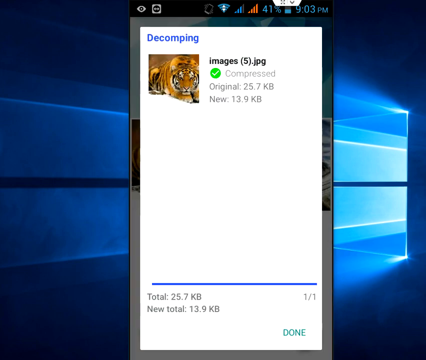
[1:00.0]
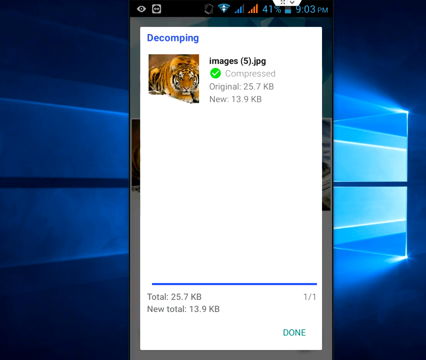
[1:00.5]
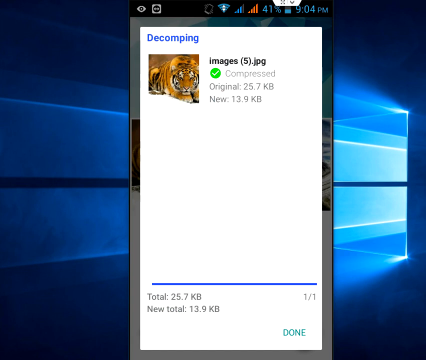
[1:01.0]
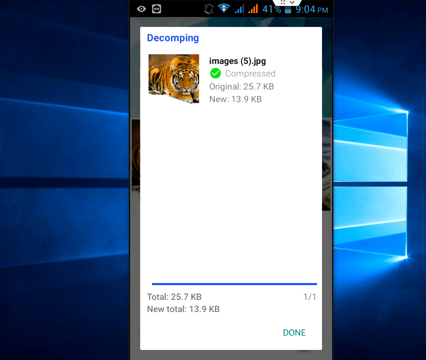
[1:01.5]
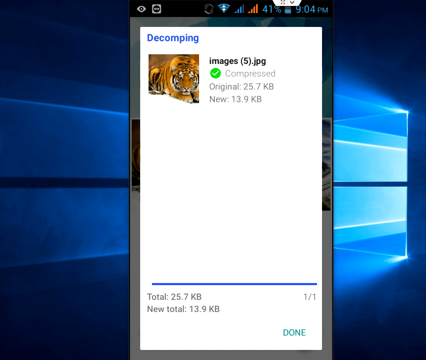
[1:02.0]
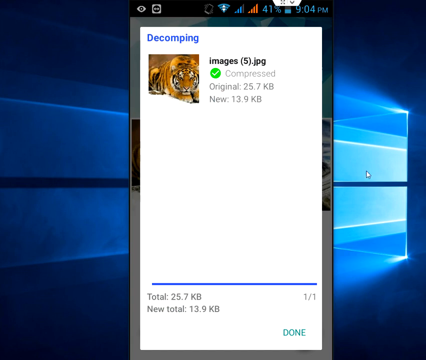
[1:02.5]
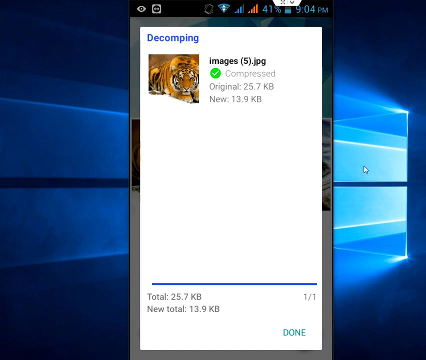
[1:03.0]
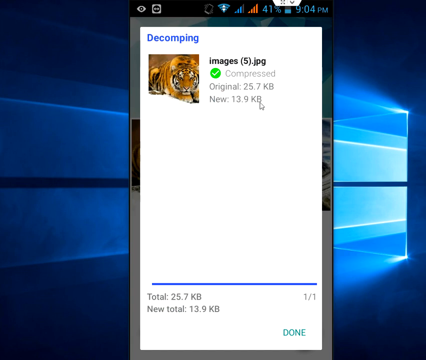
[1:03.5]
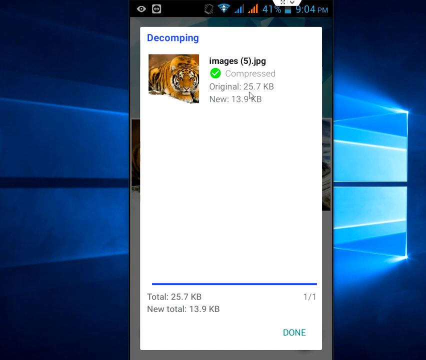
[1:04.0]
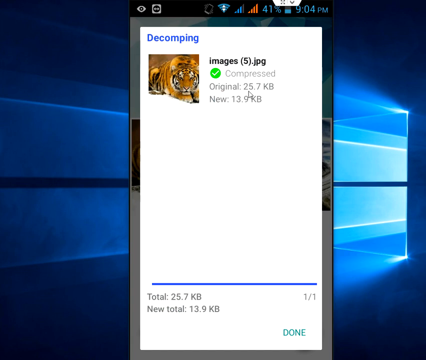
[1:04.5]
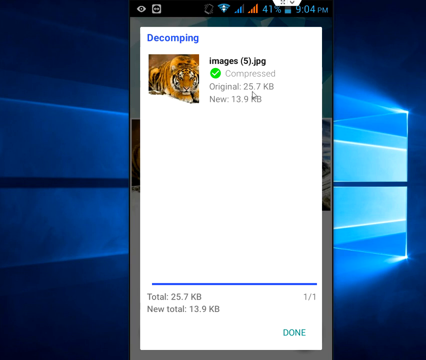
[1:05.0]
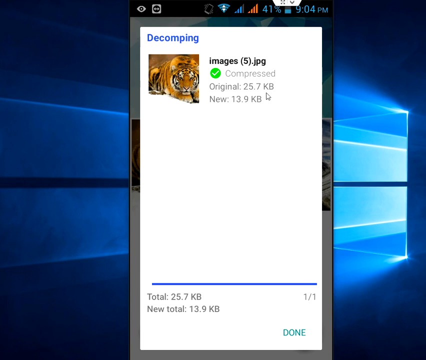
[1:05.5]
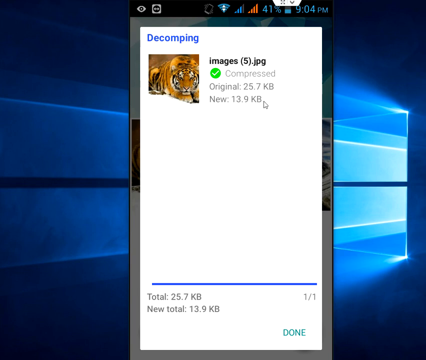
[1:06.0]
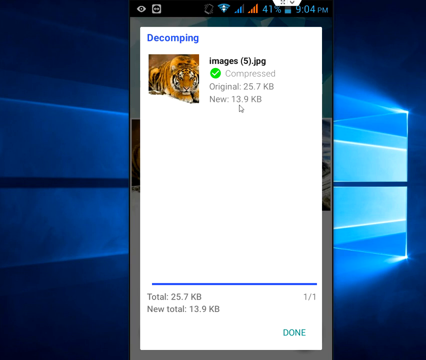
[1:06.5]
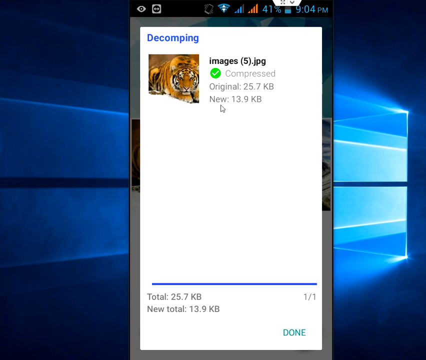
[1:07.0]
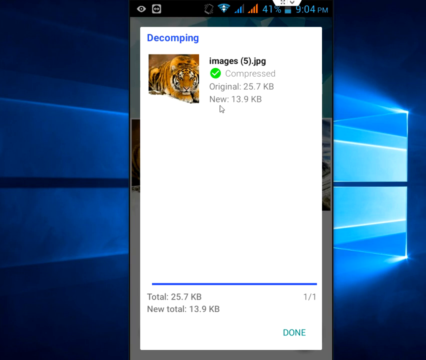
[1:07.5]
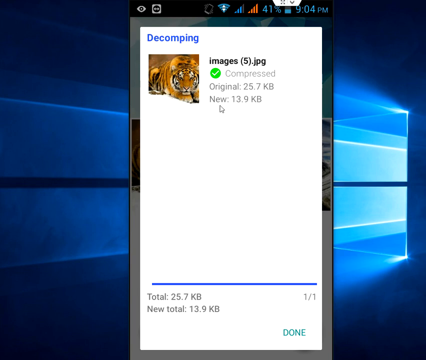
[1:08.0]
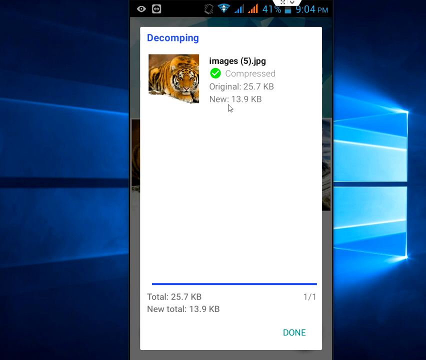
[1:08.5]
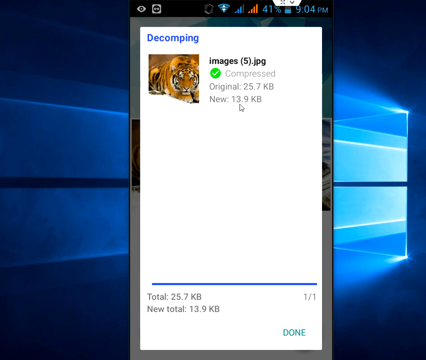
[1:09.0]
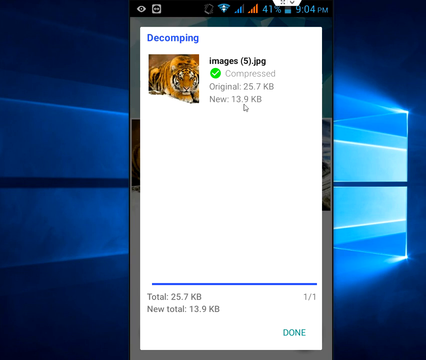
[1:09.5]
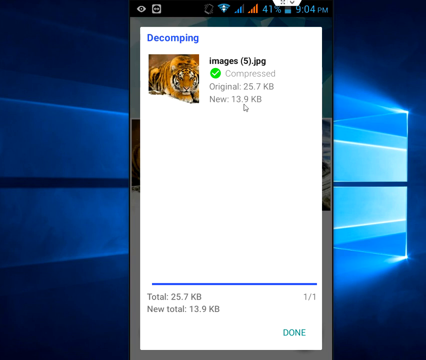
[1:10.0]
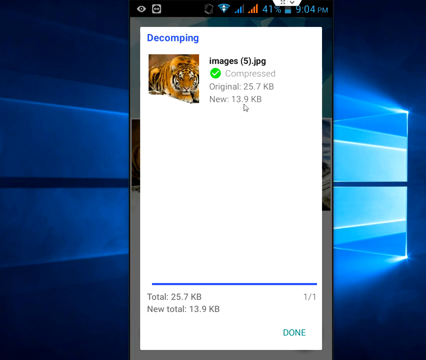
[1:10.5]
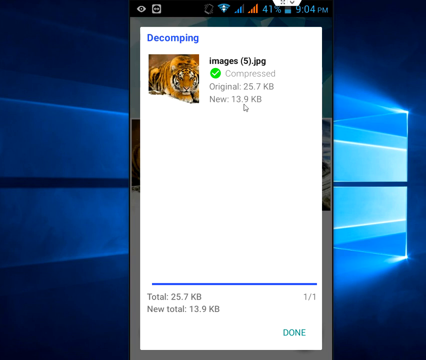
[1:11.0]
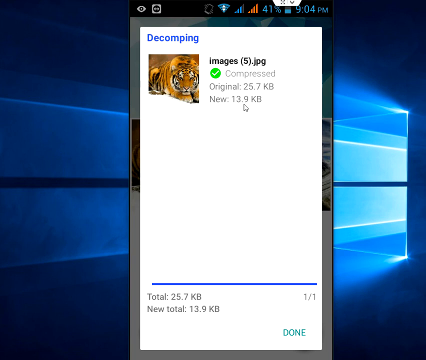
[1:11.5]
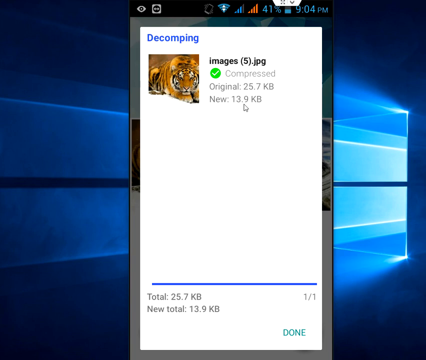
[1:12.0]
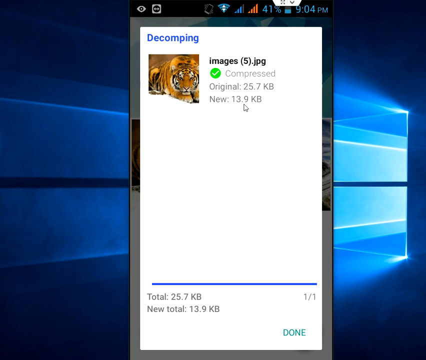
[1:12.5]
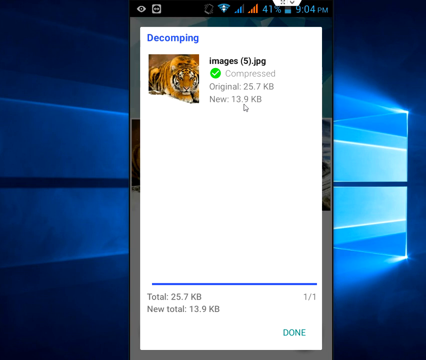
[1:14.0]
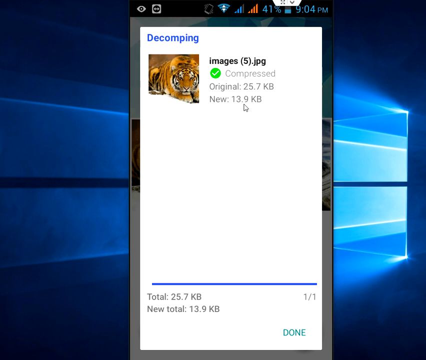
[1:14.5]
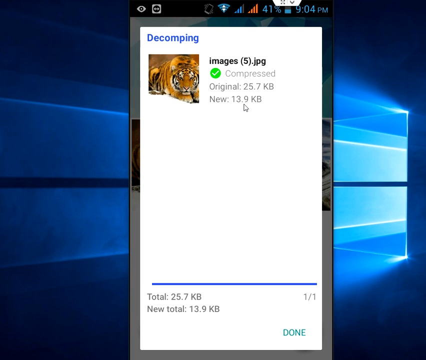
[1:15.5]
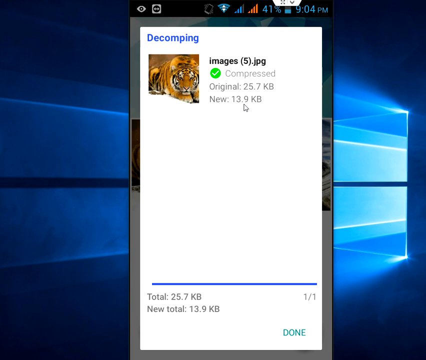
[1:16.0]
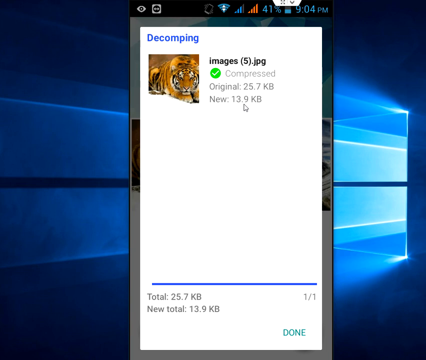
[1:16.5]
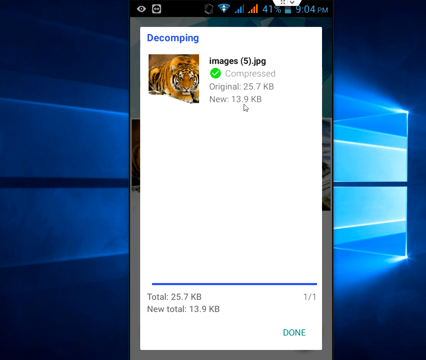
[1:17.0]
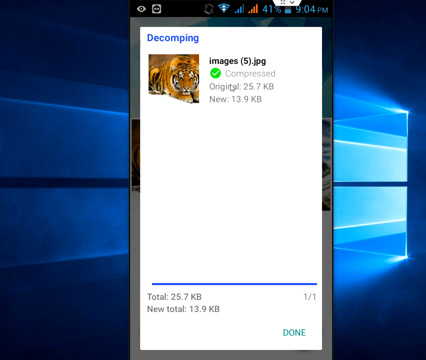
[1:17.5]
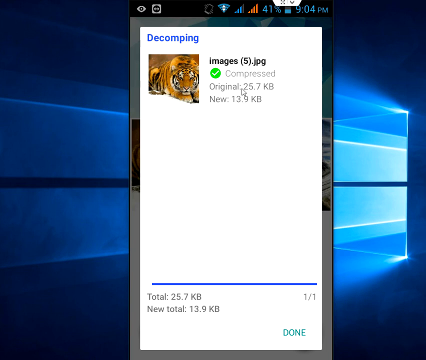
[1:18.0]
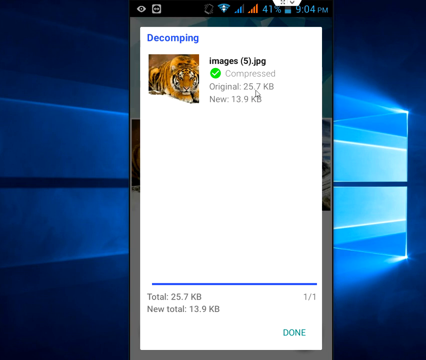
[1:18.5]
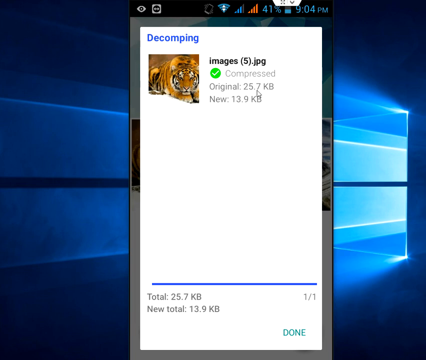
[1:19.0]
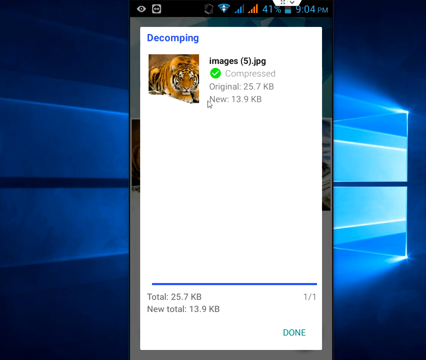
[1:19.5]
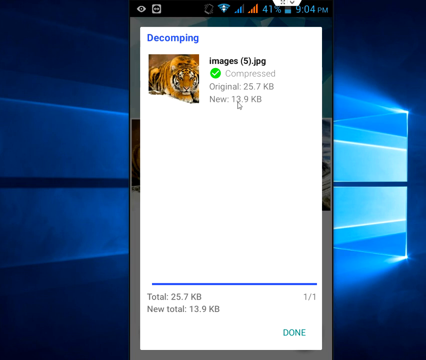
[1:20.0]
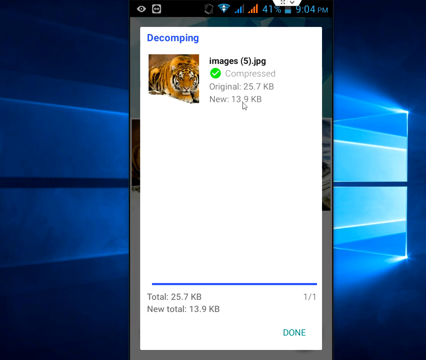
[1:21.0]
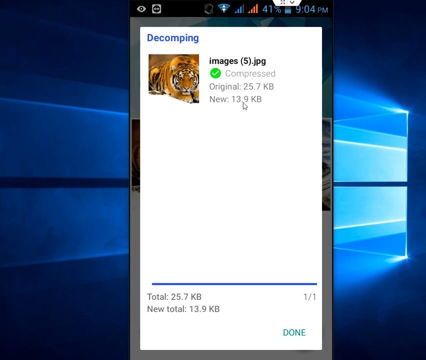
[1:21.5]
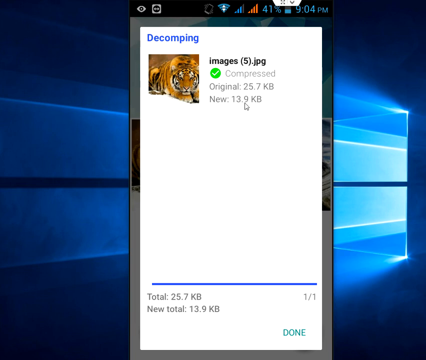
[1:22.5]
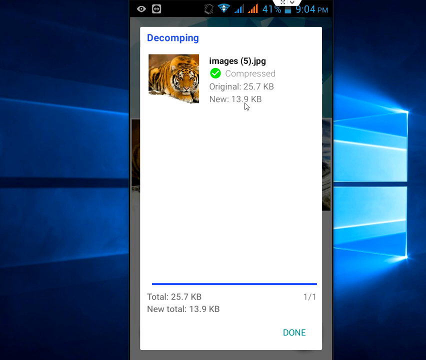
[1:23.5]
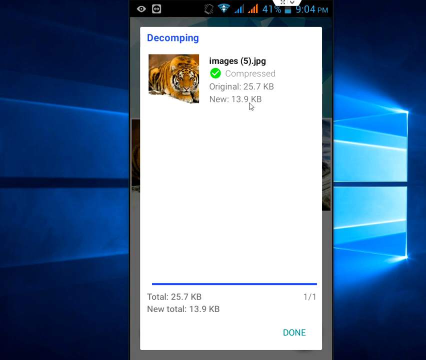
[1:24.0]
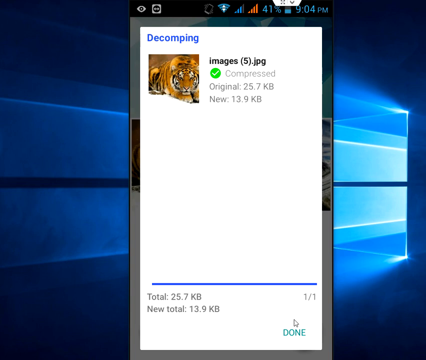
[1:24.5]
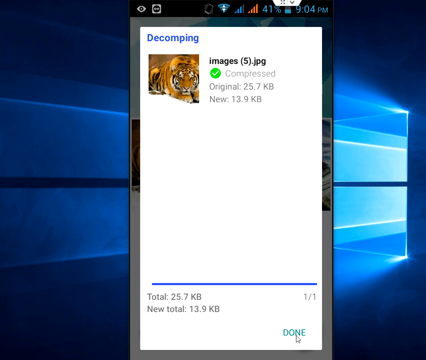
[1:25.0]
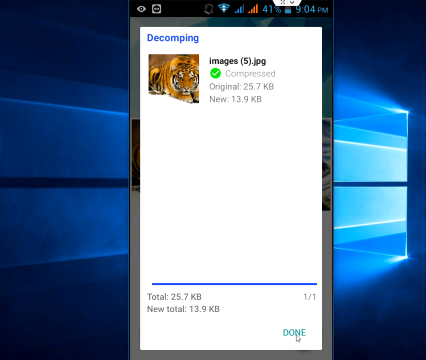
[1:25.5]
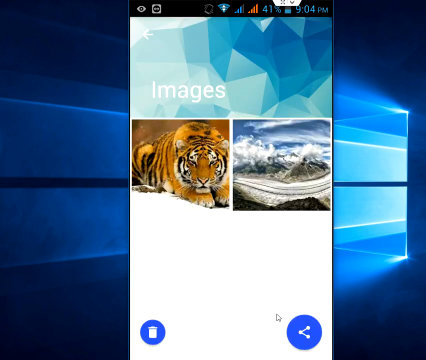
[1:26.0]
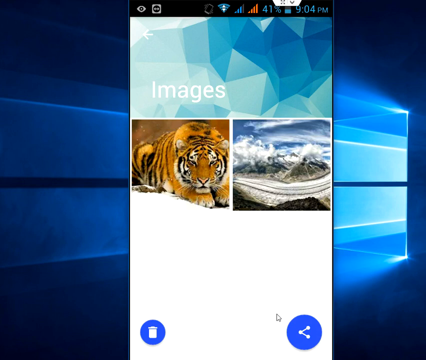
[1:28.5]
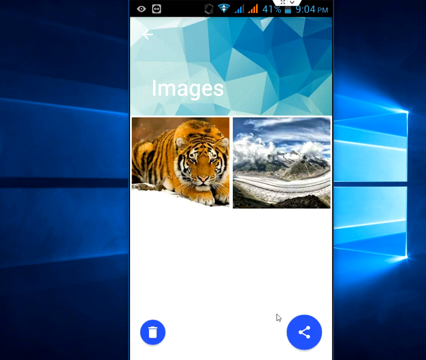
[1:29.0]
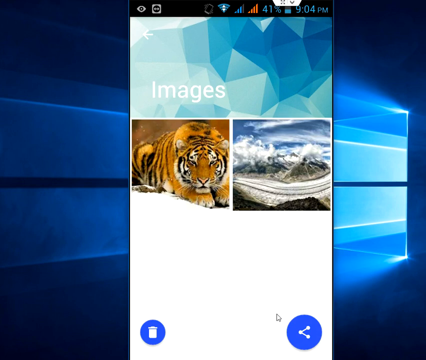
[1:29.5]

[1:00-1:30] A pop-up shows compression results: original 25.7 kb, new 13.9 kb, with the totals showing the same numbers and "1 of 1". The user hovers over the numbers. The time is 9:04 PM. The user clicks done, and an images page appears with a landscape image and the recently compressed photo of a lion. On this page there seems to be a trash icon for deleting images and a share icon for sharing them. The interface still looks old and seems to be Android.